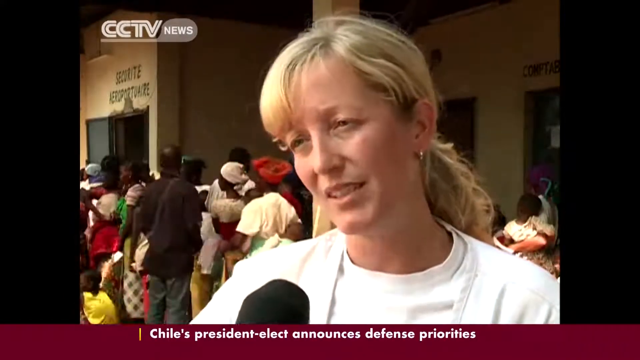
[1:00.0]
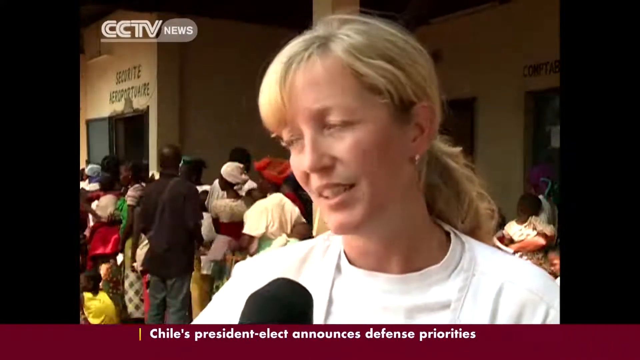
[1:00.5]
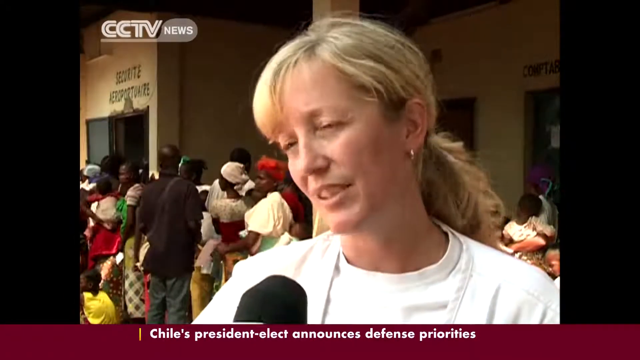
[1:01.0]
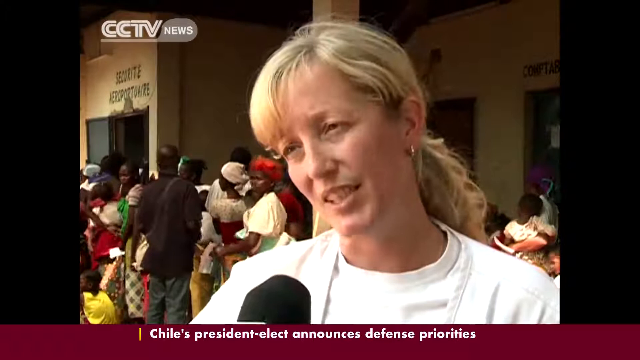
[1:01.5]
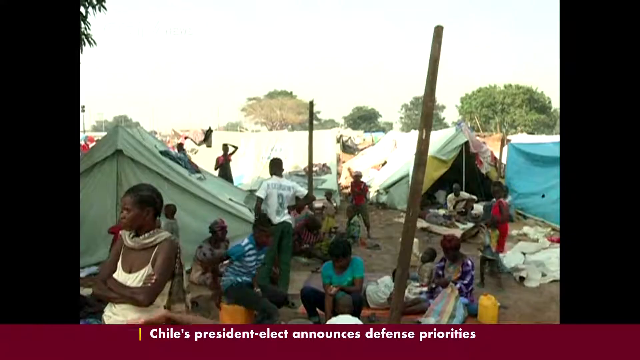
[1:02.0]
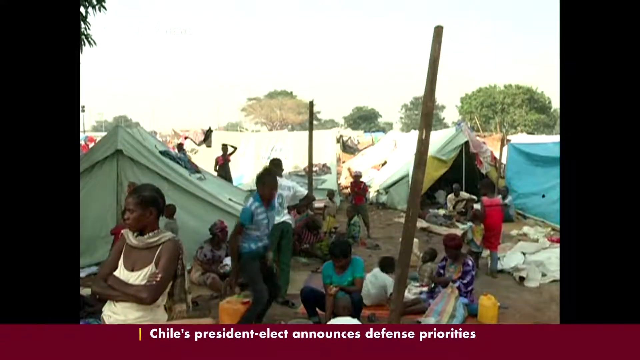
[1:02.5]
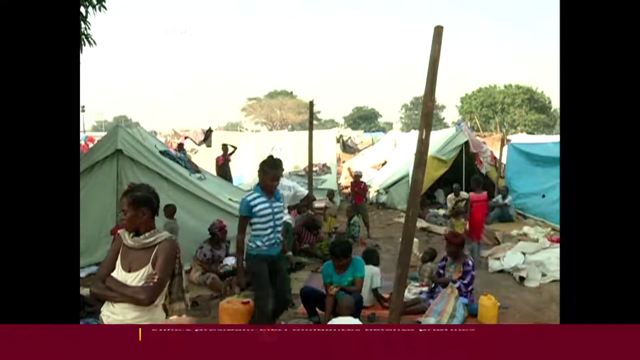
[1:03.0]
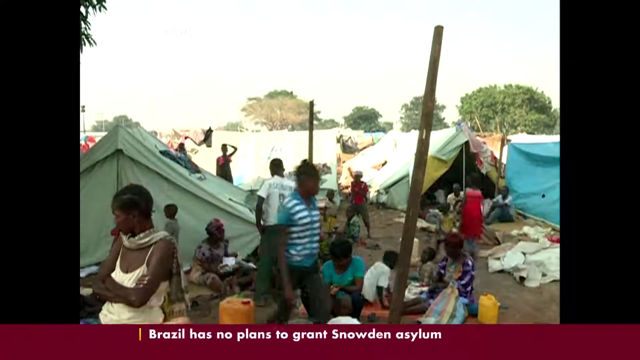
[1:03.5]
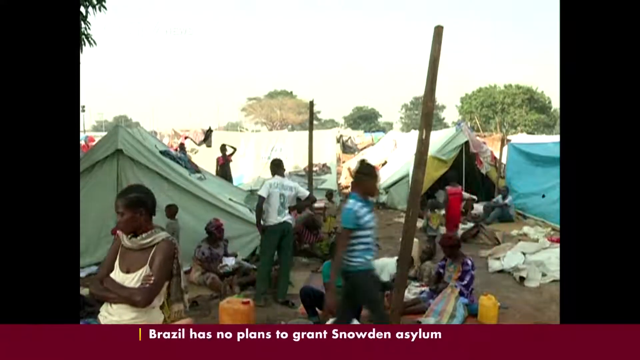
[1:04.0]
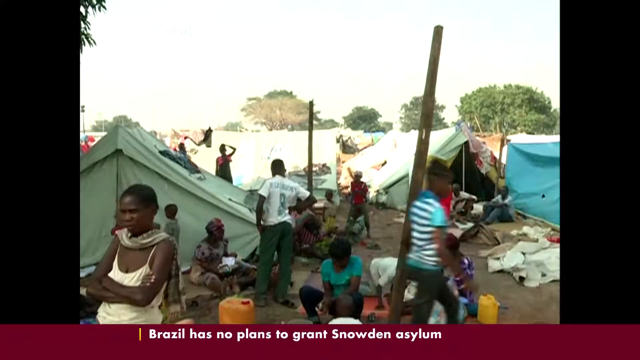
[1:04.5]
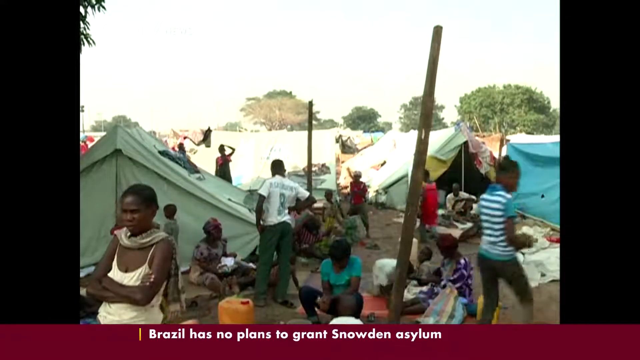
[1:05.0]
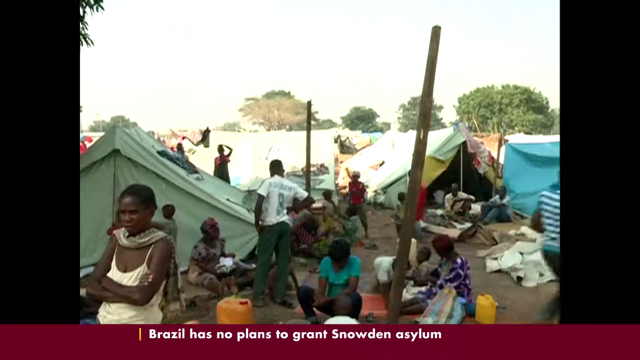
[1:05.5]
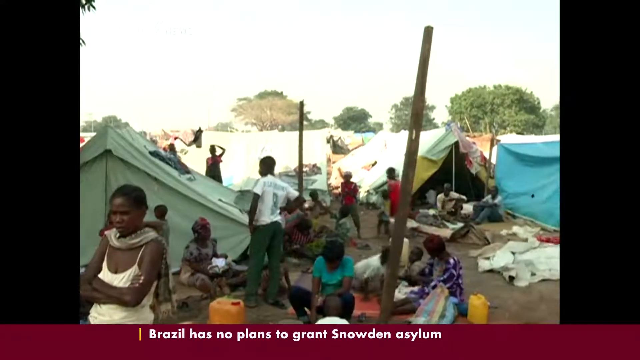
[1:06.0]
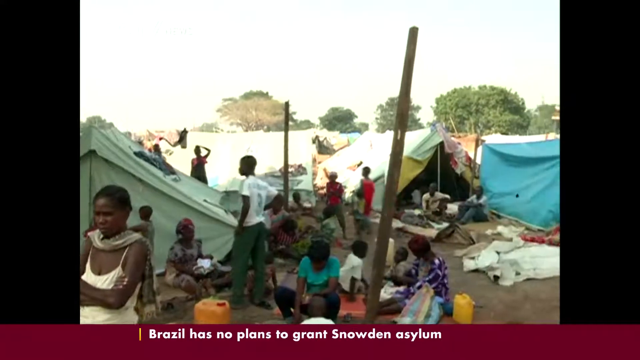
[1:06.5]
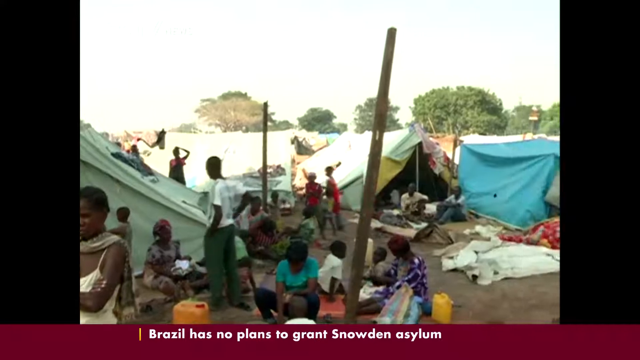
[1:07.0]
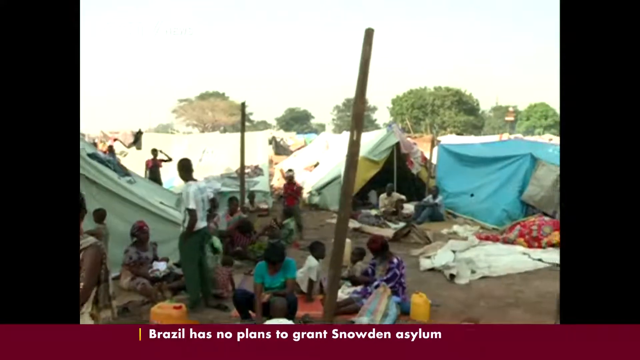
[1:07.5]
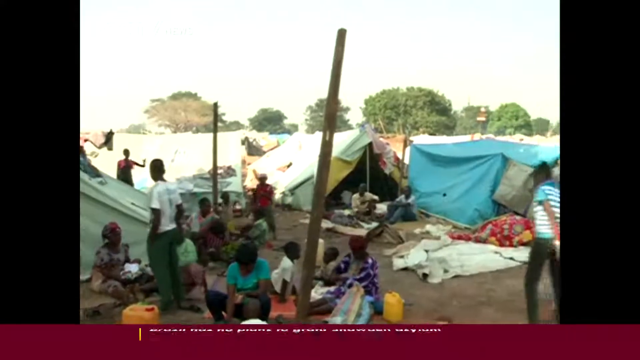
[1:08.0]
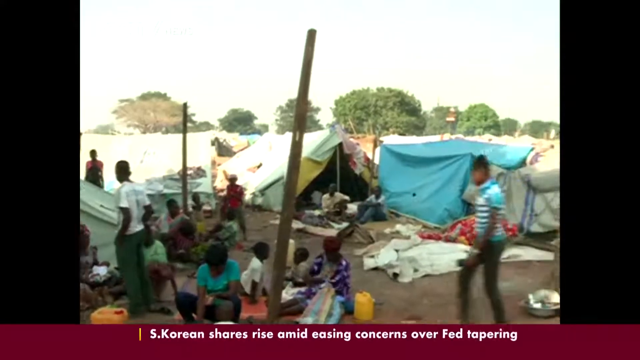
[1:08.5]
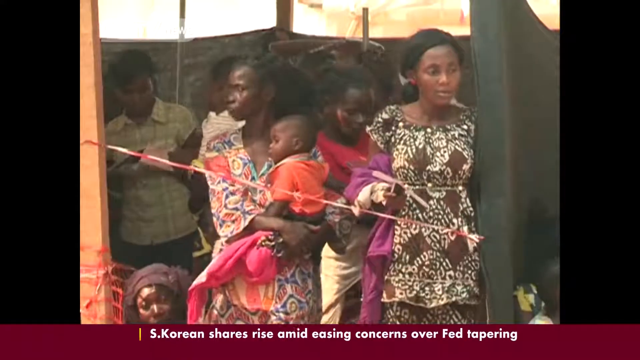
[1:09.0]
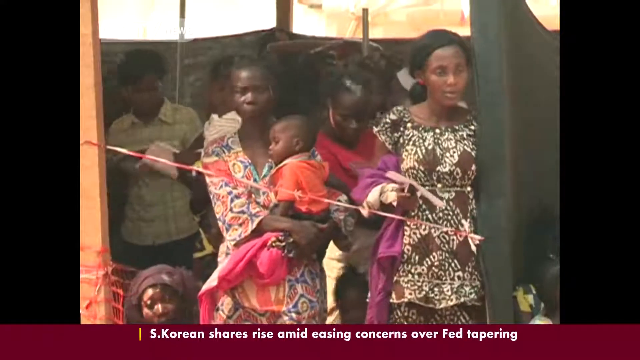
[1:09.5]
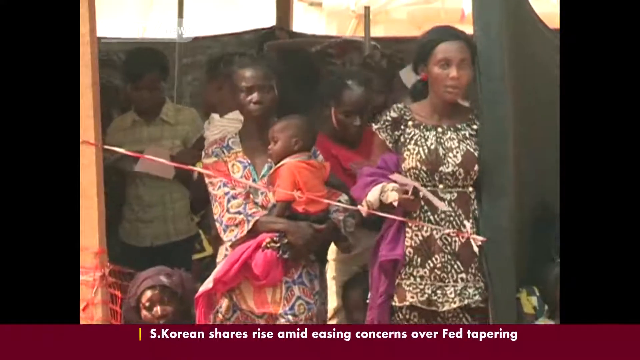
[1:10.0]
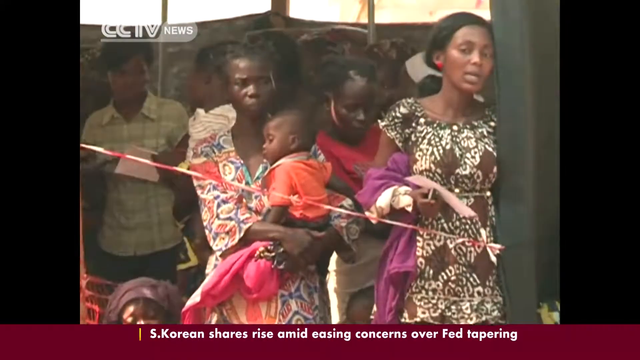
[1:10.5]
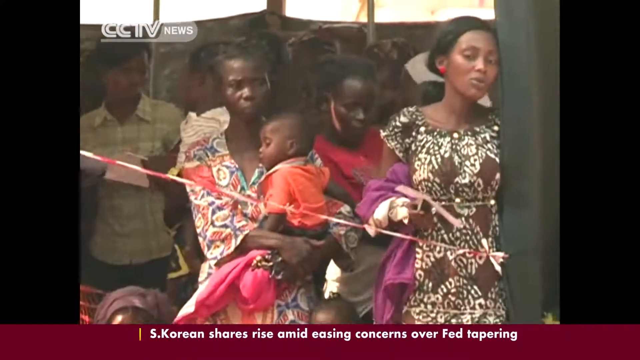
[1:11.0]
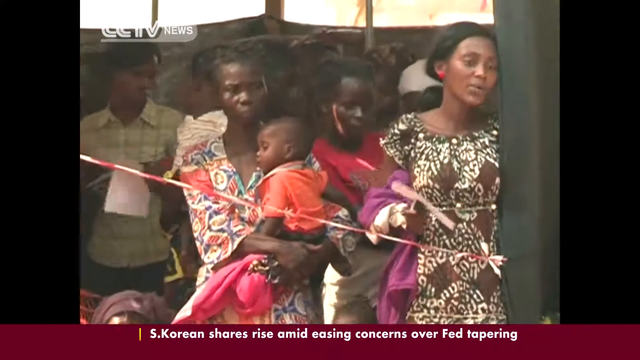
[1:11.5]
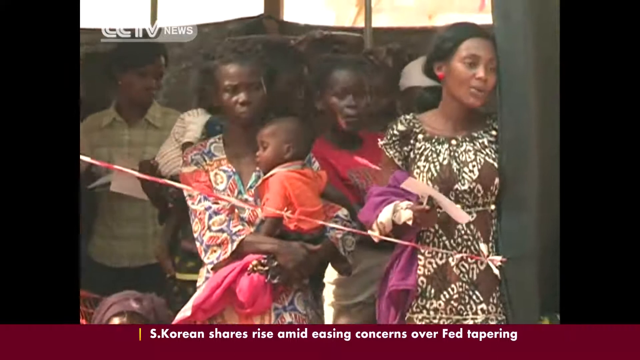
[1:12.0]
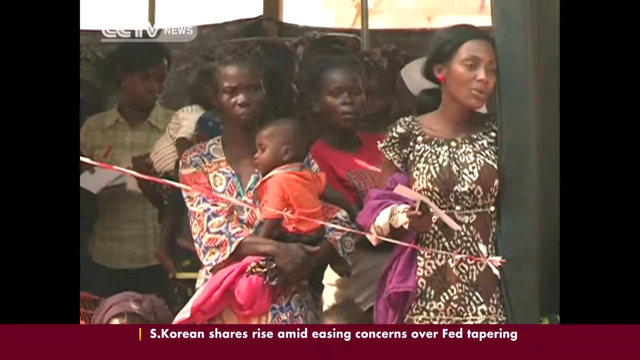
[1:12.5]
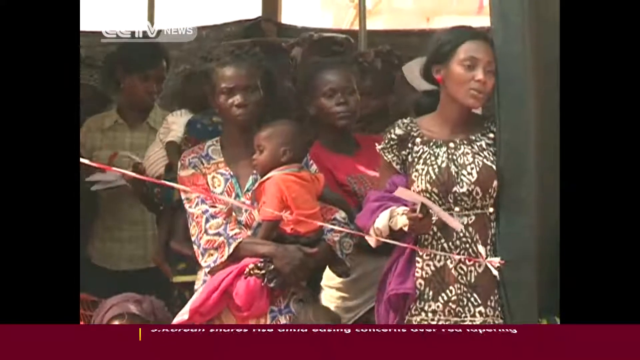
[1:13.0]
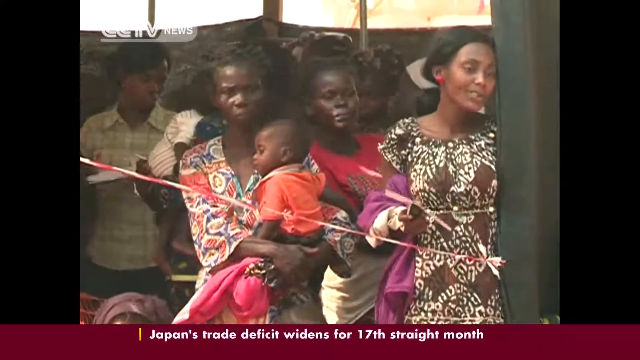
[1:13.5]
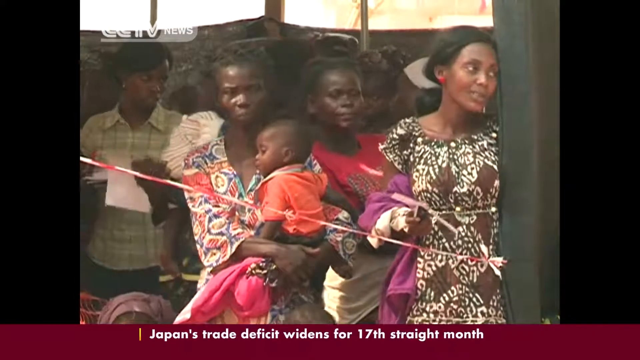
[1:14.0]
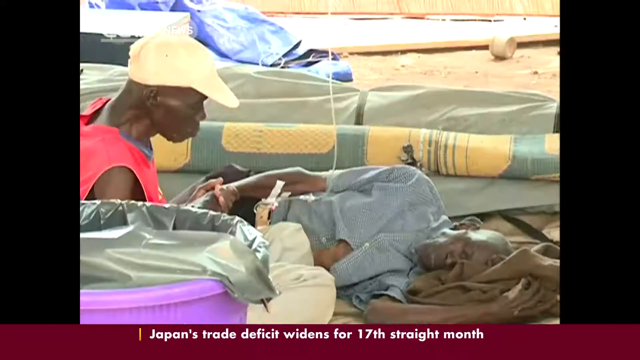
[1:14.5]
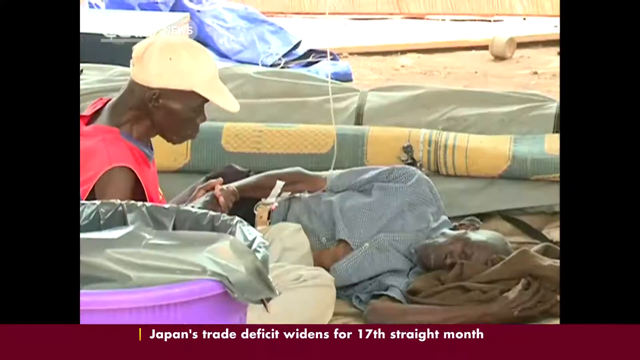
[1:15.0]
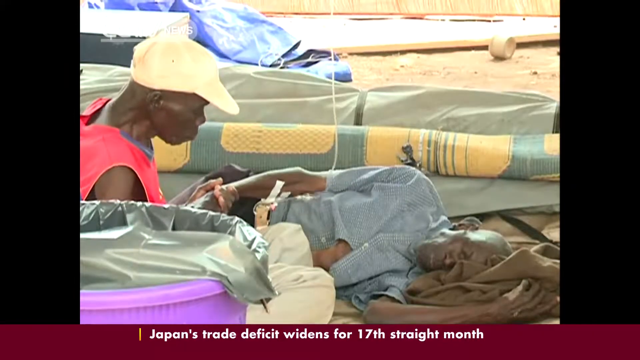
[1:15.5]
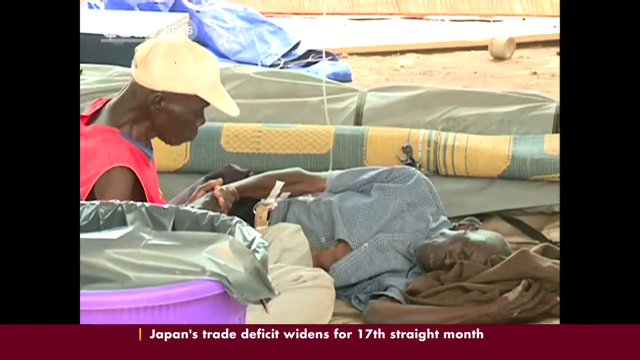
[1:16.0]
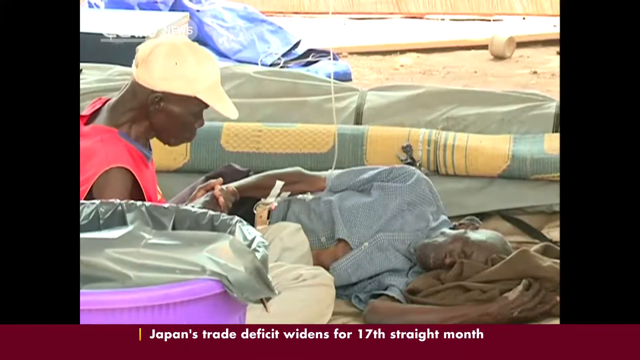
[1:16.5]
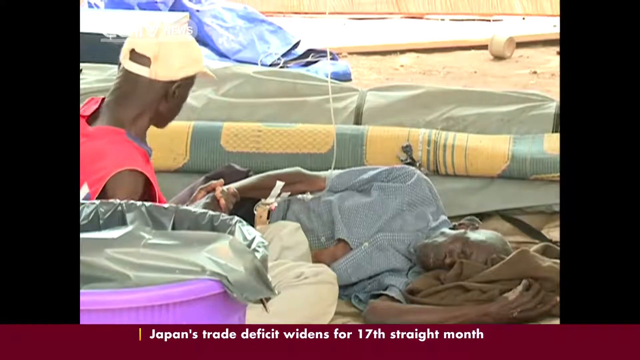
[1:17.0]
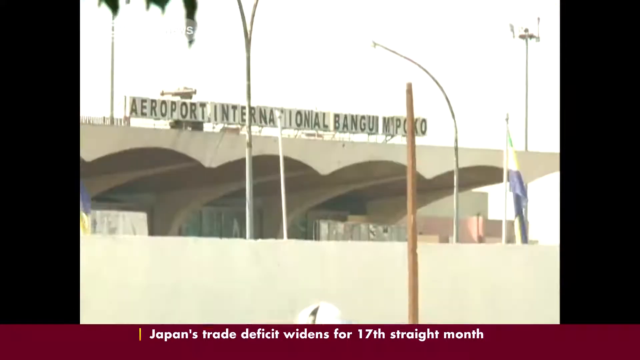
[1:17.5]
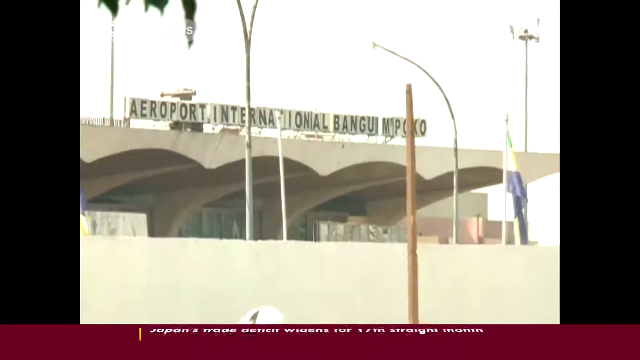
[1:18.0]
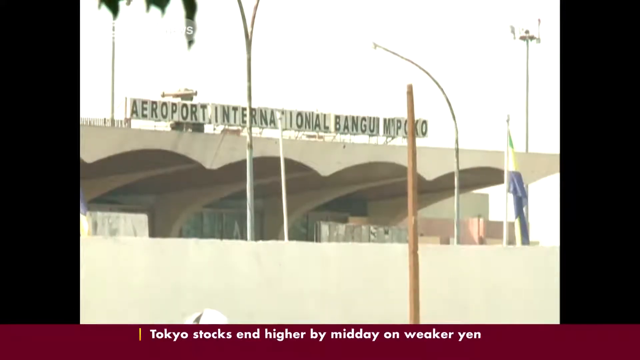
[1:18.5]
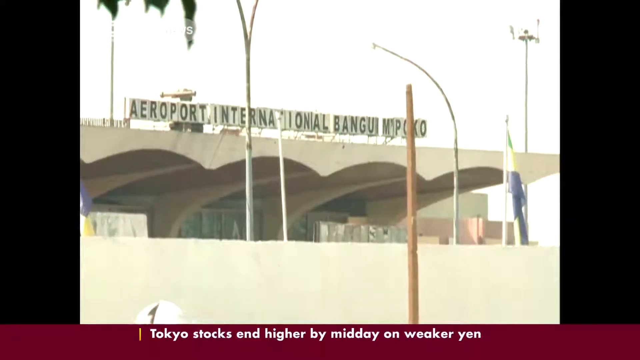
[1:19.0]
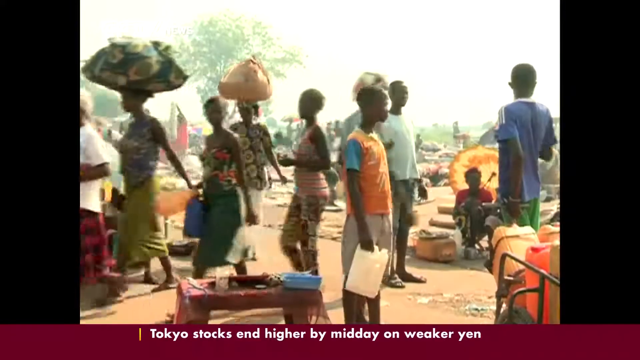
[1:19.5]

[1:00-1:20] A woman with long blonde hair pulled back in a ponytail, wearing a white shirt, has a microphone in front of her, and "CC TV News" appears at the top; she appears to be interviewed as she speaks. Another shot shows tents set up, with many people sitting in front of them and some people walking around. The shot holds, then slowly pans to the right to reveal more of the encampment. Next, some women appear; one holds a baby in front of her, one is speaking, and some hold things in their right hand. Someone who is ill, apparently a man, lies on his side while another man wearing a yellow hat is over him, possibly helping him. An exterior shot of a building follows, with what appears to be text mentioning international airports above it. A final shot shows some people walking in a busy area.